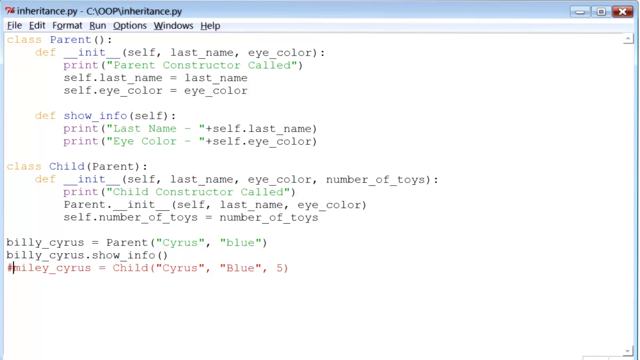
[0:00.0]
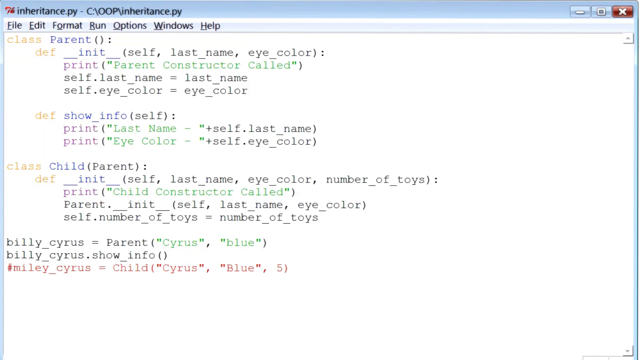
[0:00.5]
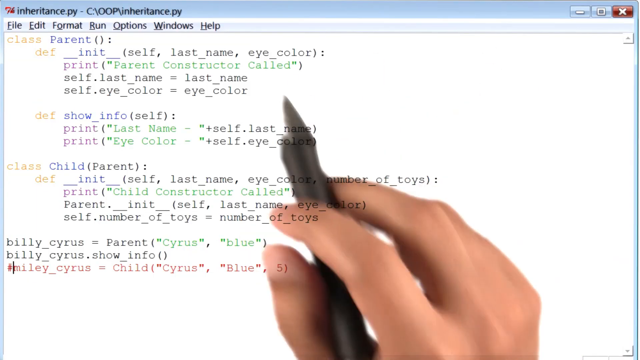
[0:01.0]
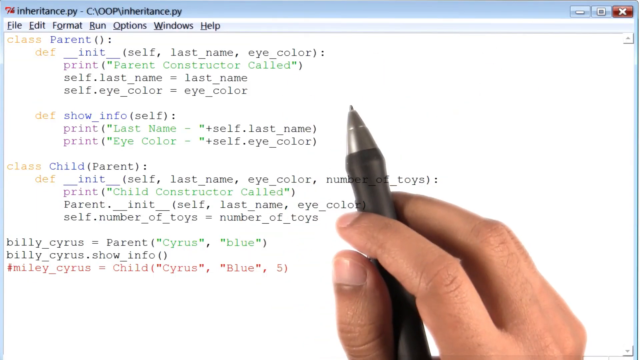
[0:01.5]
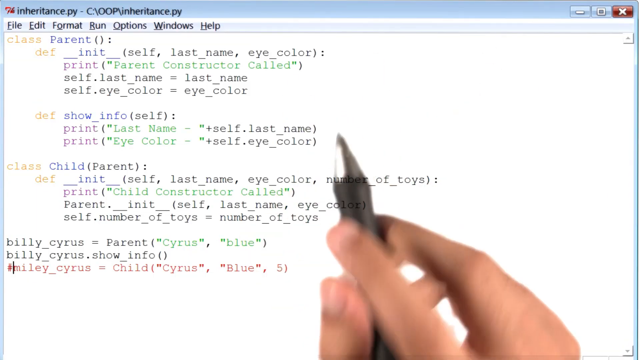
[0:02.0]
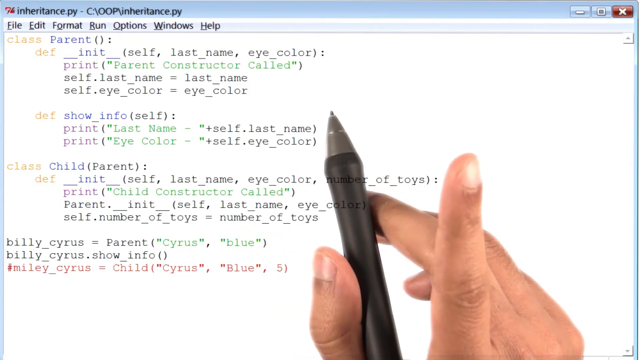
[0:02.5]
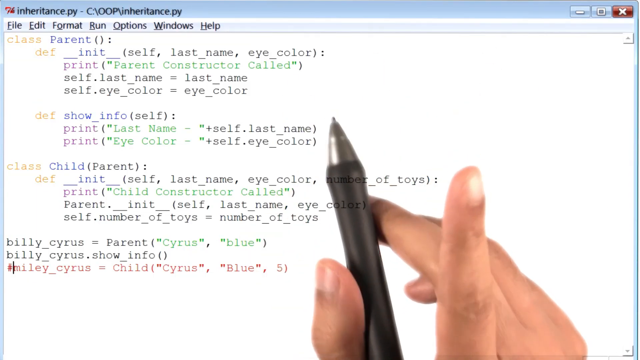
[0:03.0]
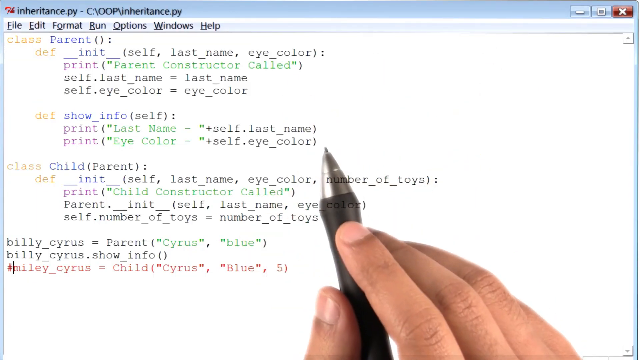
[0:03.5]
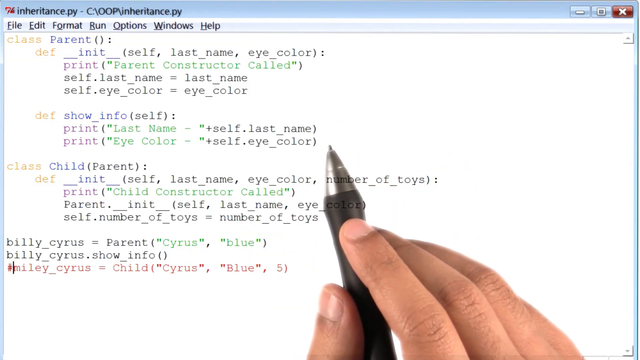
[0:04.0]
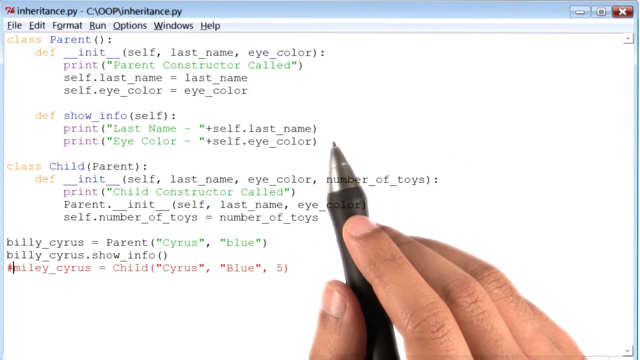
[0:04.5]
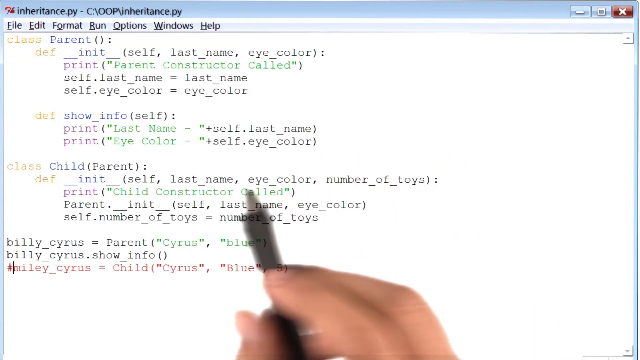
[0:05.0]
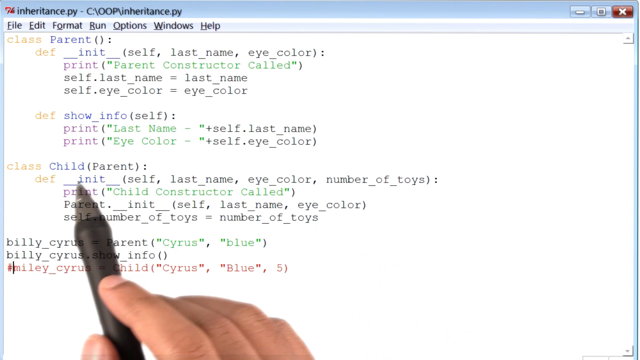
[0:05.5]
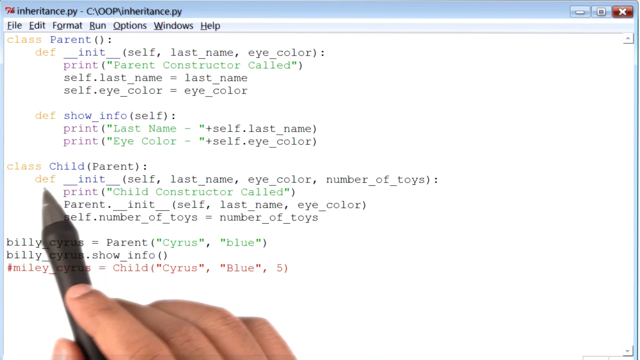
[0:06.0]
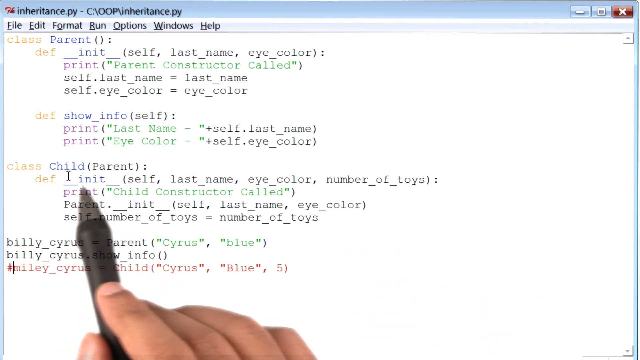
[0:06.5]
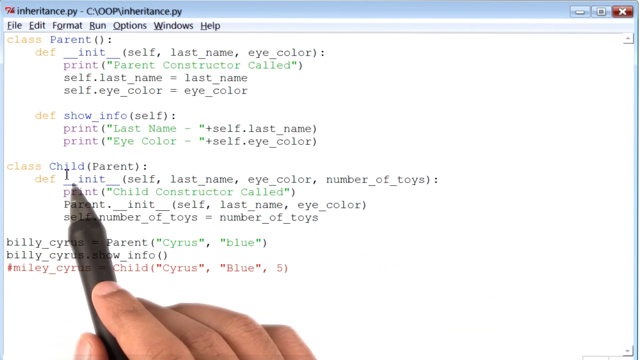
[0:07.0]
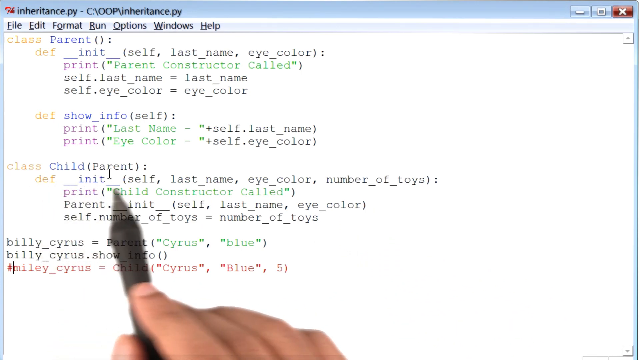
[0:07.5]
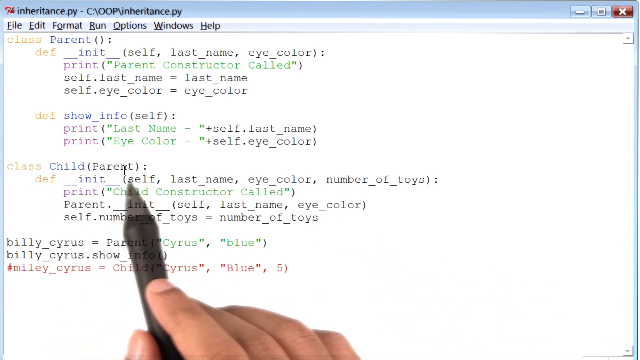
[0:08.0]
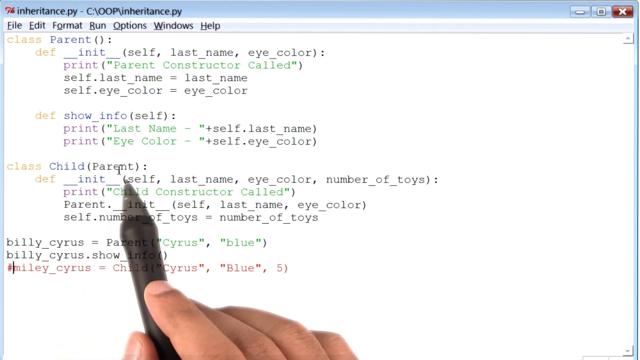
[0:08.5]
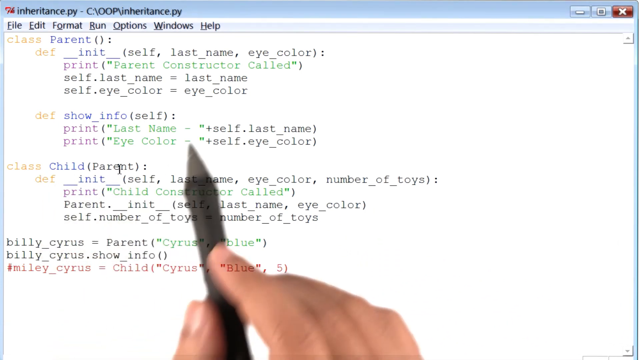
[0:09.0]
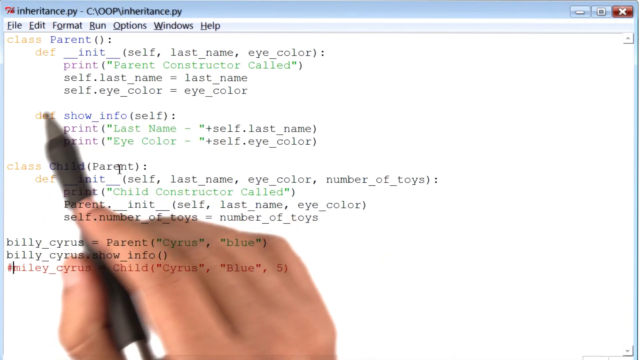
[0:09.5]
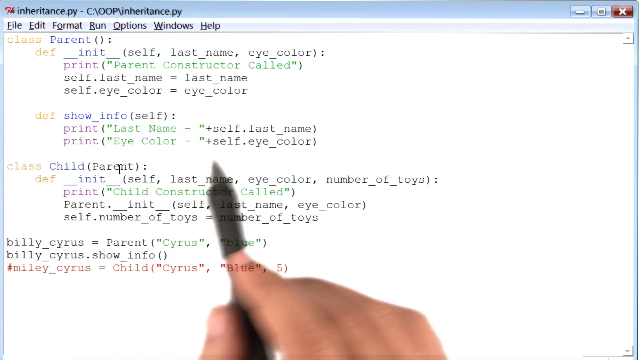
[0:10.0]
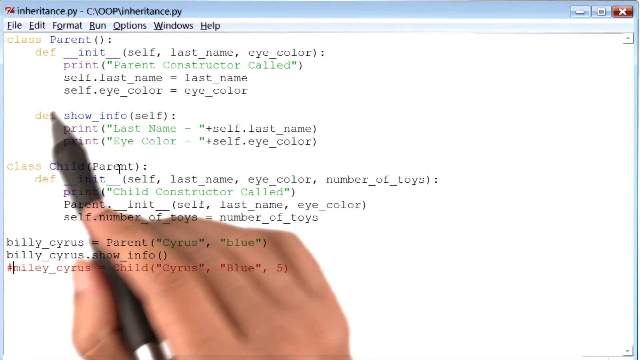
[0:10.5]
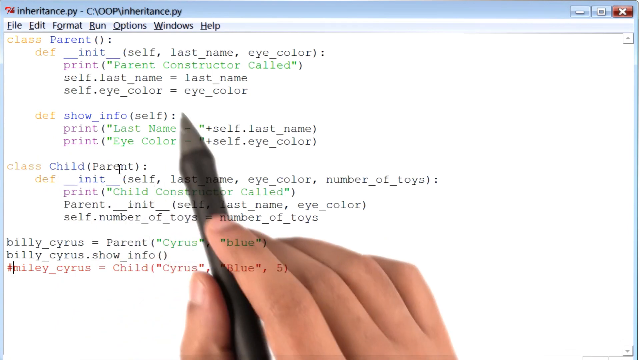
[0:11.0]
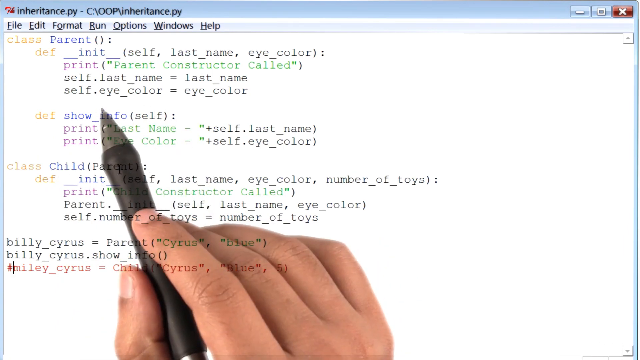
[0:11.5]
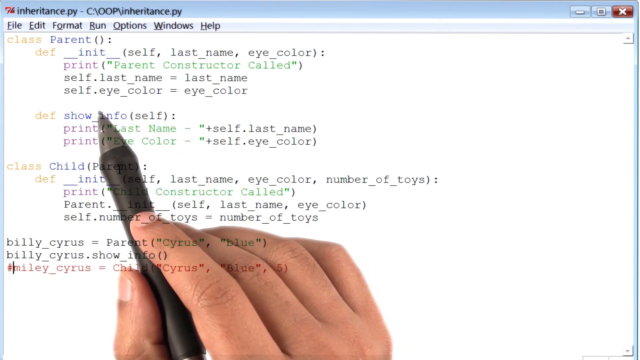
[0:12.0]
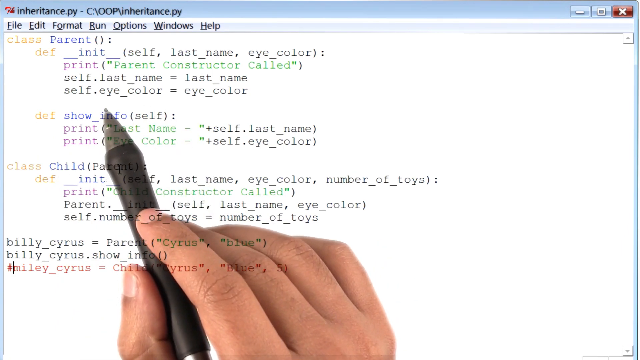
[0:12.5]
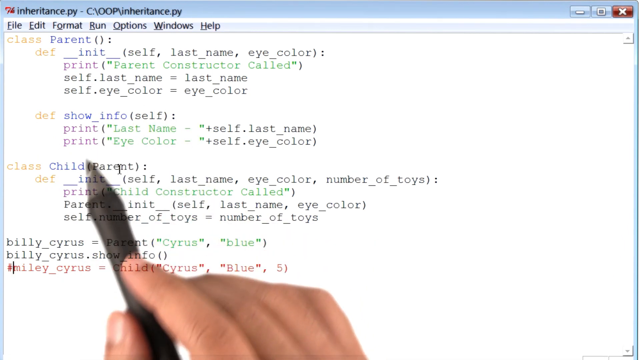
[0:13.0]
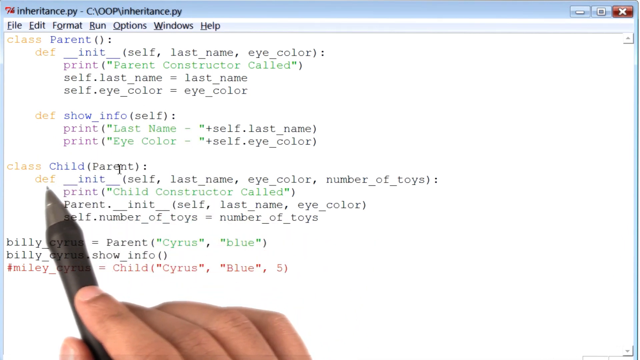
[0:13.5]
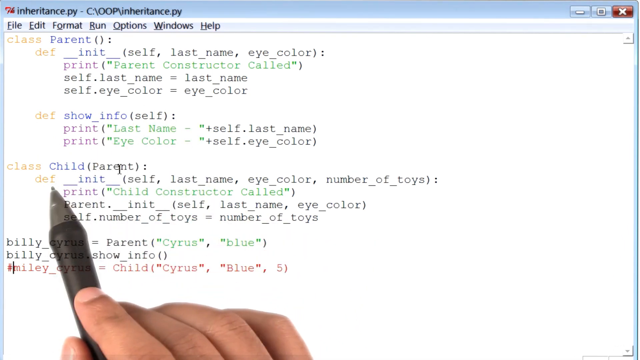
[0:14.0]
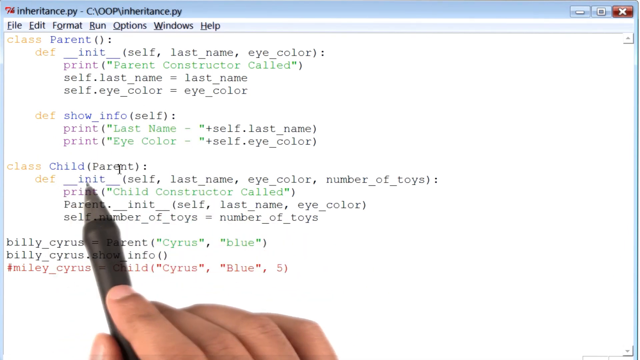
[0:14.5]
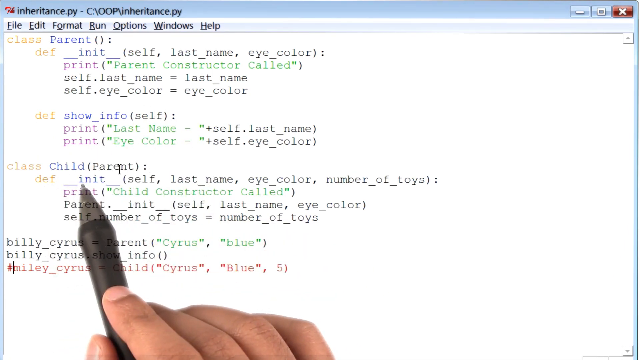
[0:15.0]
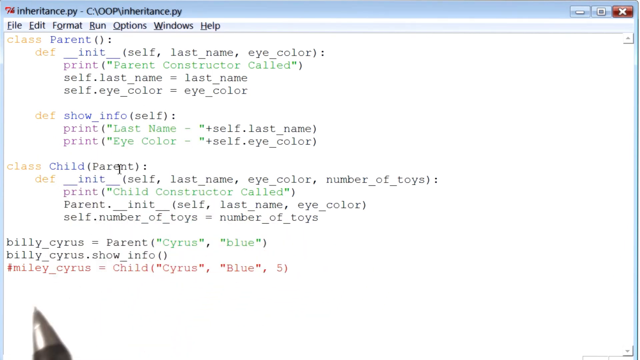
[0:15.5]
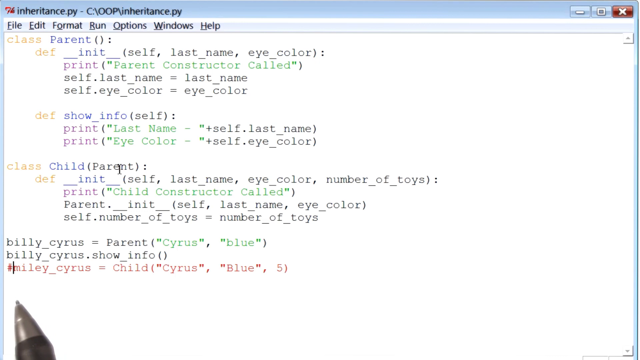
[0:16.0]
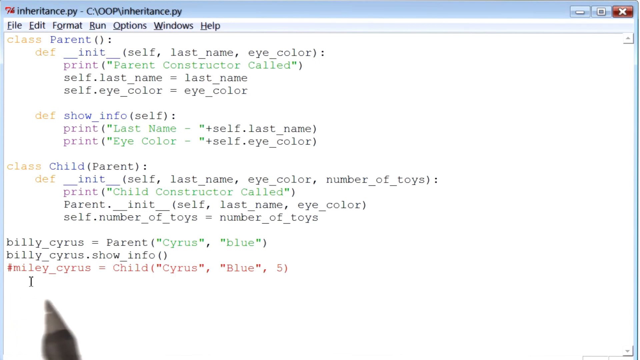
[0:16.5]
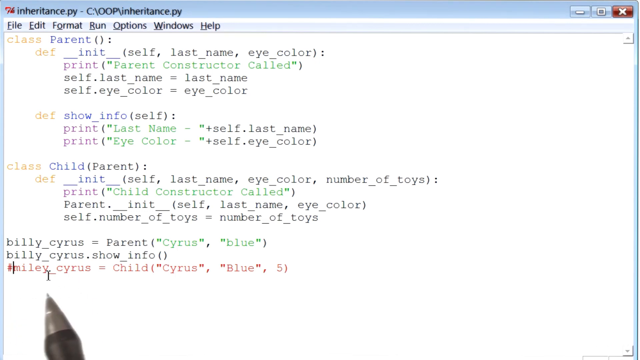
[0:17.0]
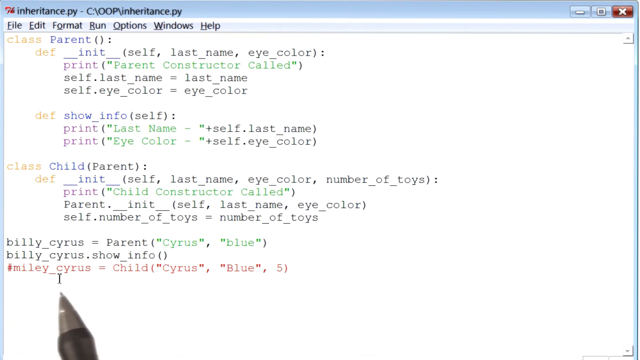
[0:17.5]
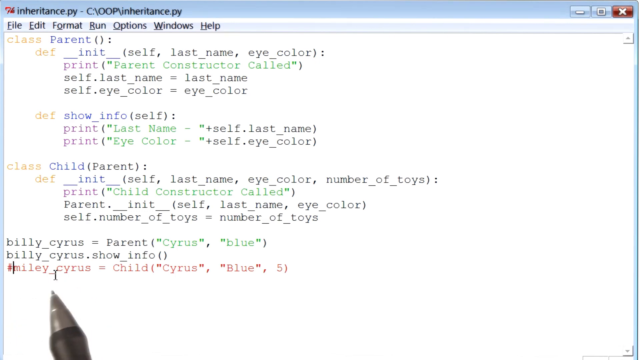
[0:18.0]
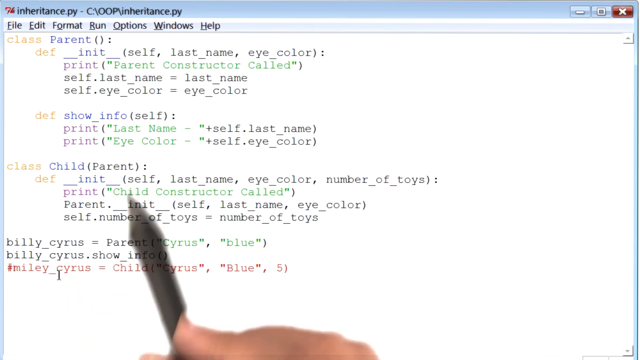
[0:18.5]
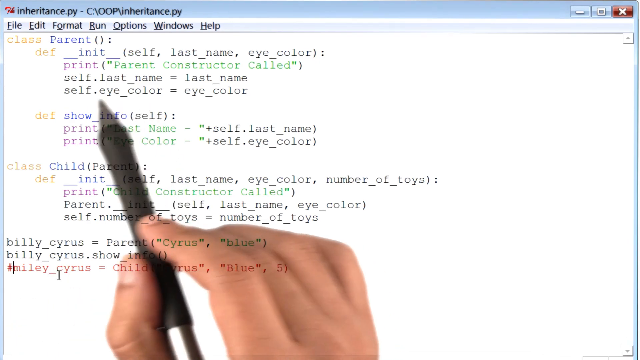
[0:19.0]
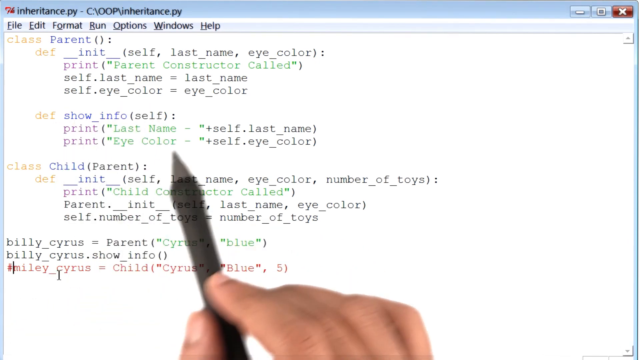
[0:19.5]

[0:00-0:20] Code appears on screen, showing text such as "class parent:", self, last name, eye color, "parent constructor", "child(parent)", "billy cyrus = parent(billy cyrus)" and "show info", with Miley Cyrus as the child; the text is in different colors. A man's right hand appears holding something like a small stylus and begins circling some of the letters. The object is black with a silver, conical-type tip and a metal part at the end, so it may actually be a real pen. The person is typing this code in a document called "inheritance py".